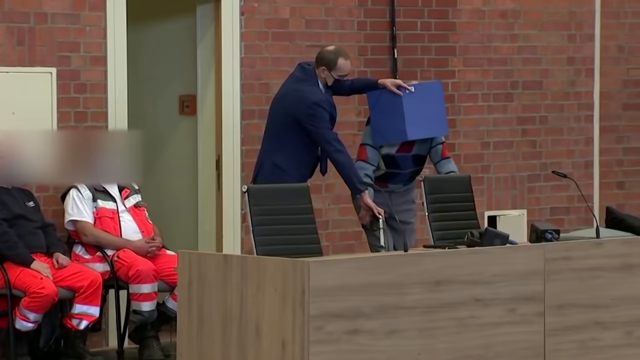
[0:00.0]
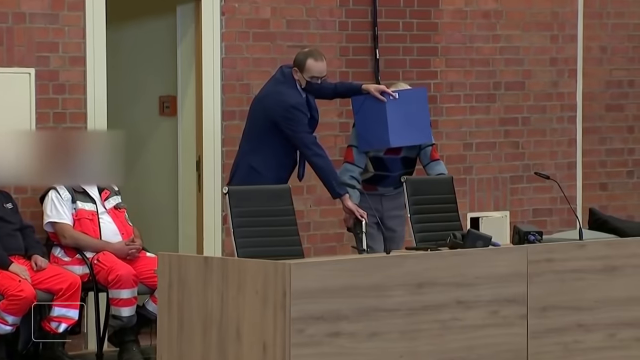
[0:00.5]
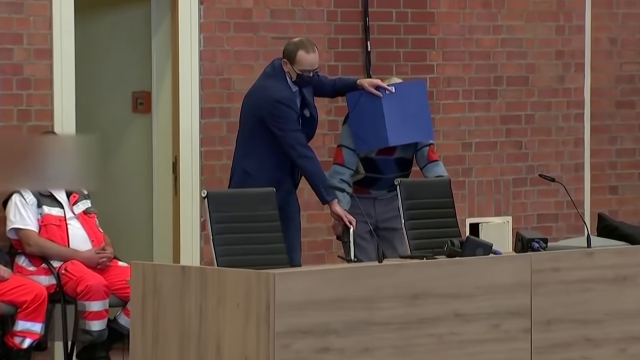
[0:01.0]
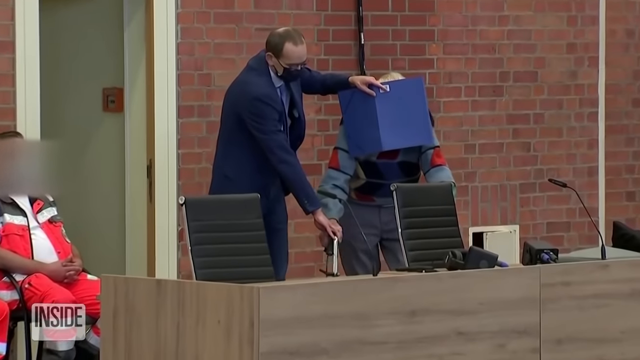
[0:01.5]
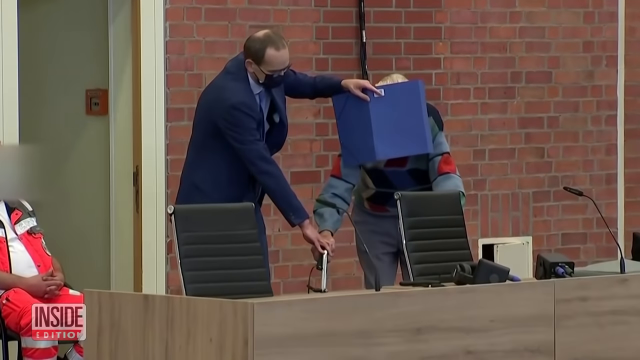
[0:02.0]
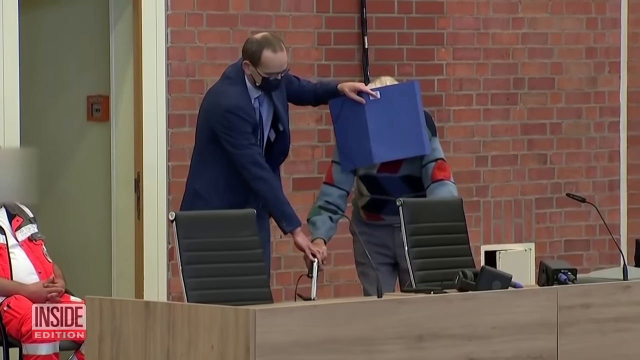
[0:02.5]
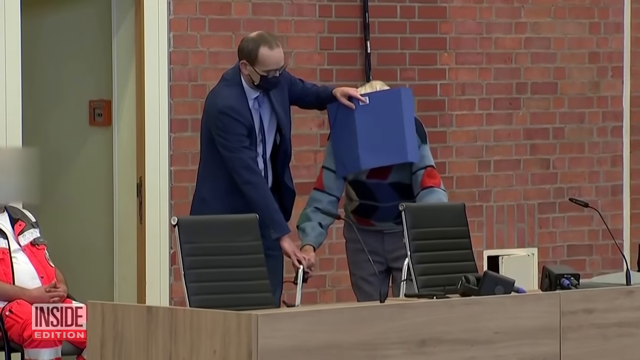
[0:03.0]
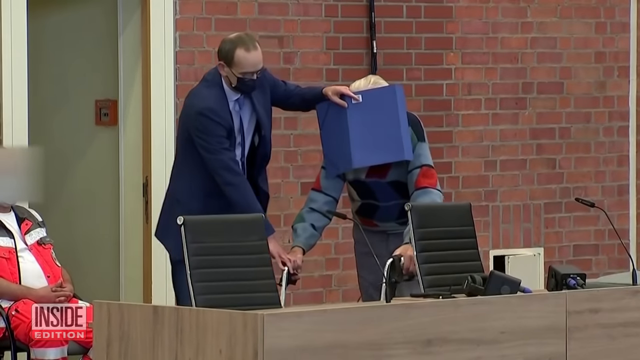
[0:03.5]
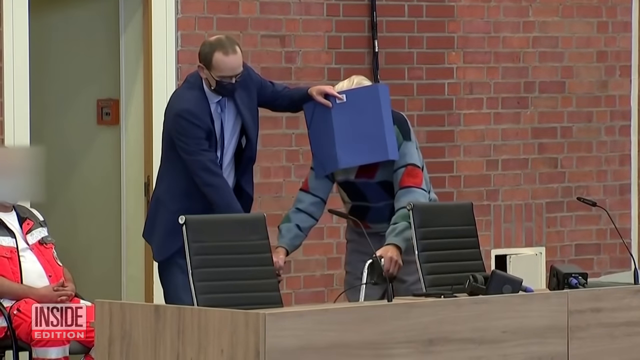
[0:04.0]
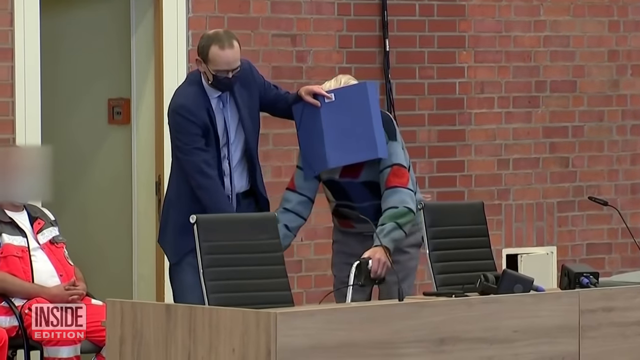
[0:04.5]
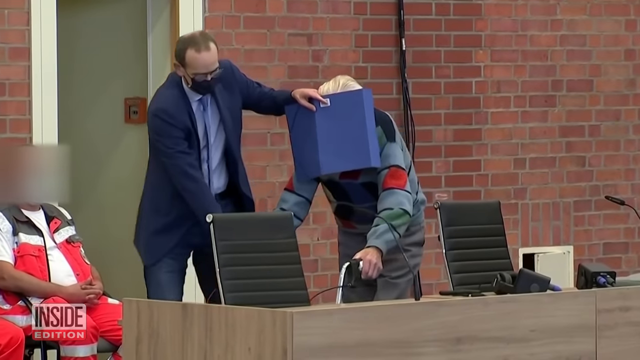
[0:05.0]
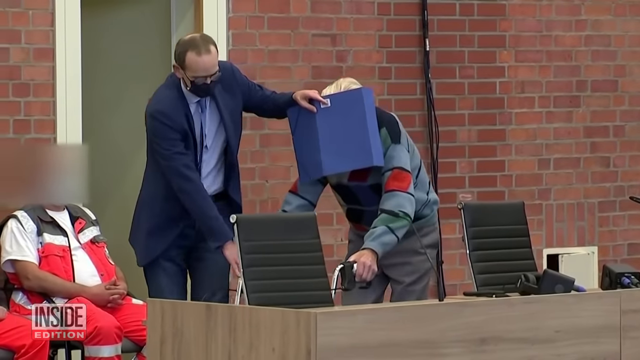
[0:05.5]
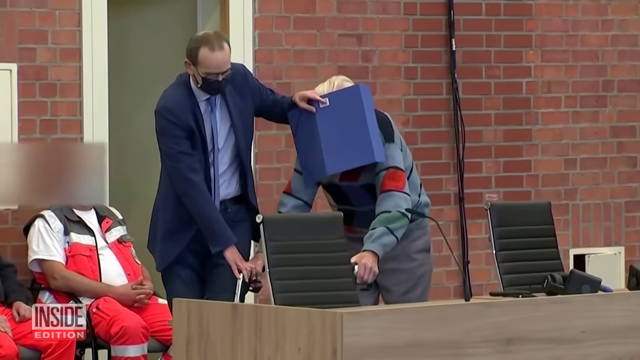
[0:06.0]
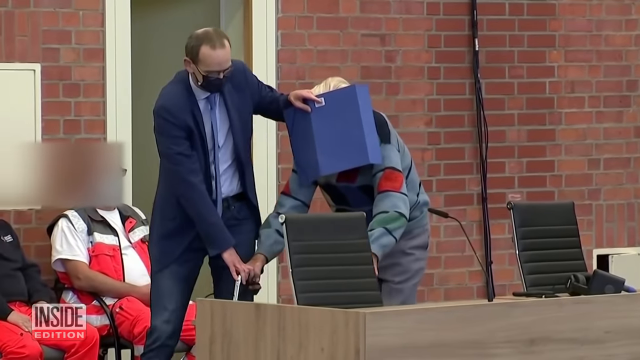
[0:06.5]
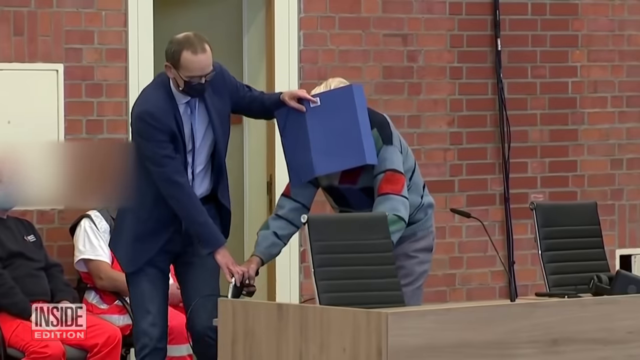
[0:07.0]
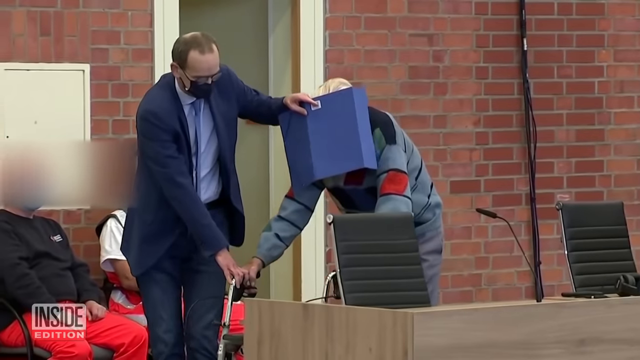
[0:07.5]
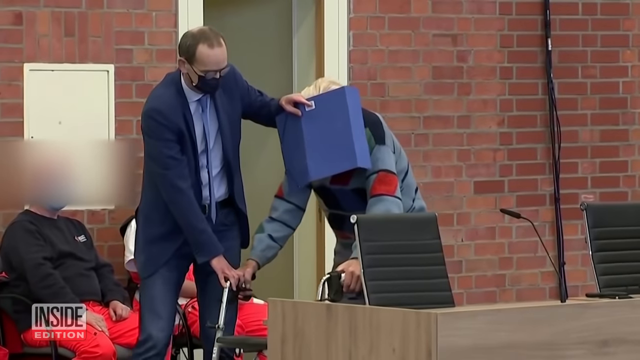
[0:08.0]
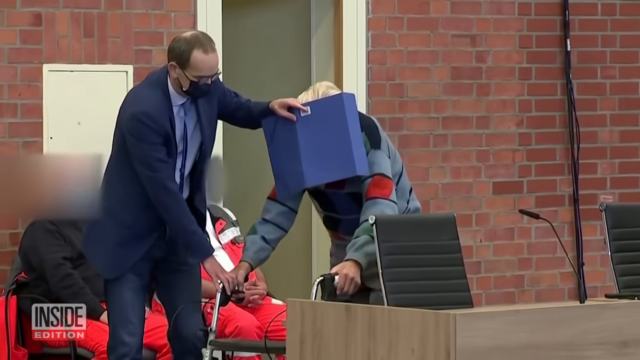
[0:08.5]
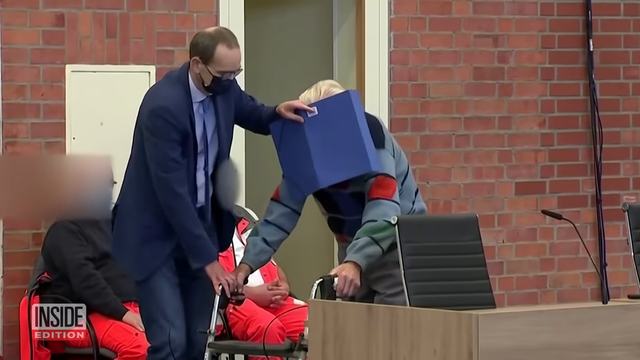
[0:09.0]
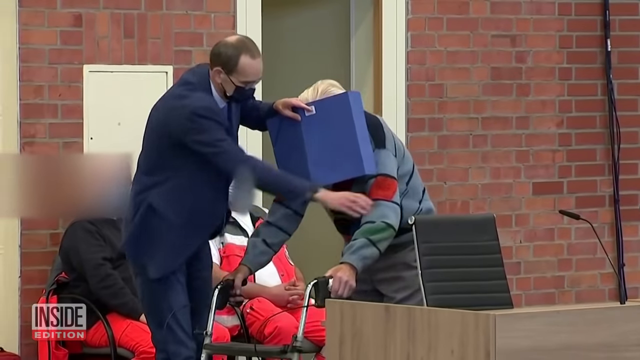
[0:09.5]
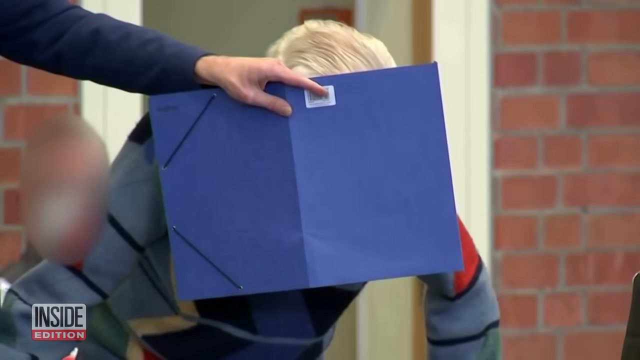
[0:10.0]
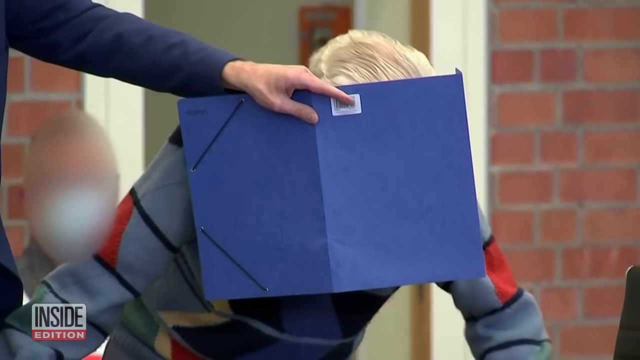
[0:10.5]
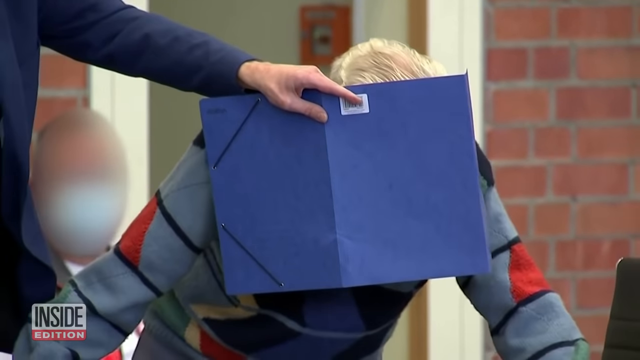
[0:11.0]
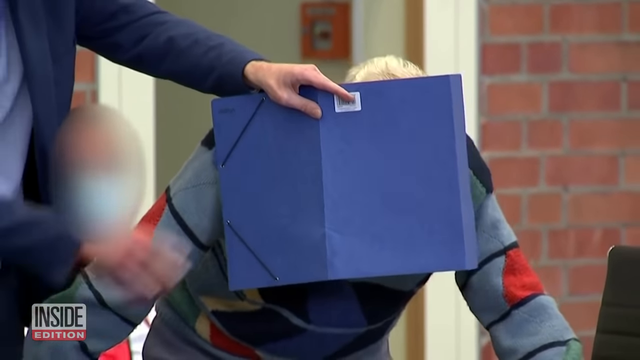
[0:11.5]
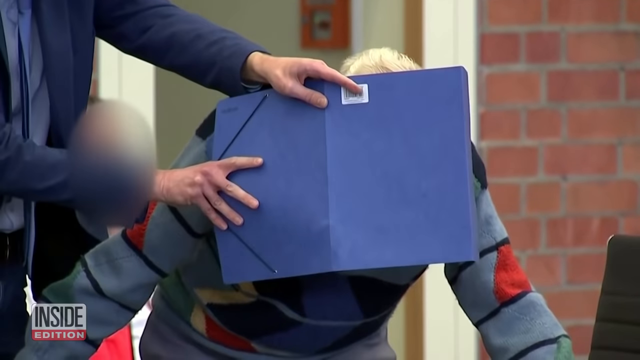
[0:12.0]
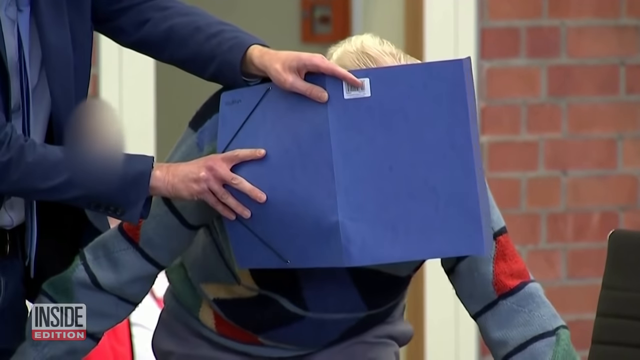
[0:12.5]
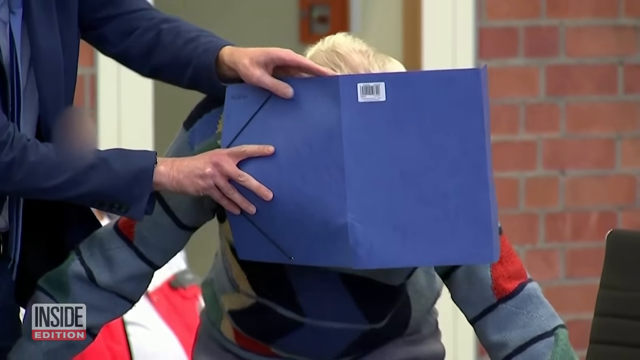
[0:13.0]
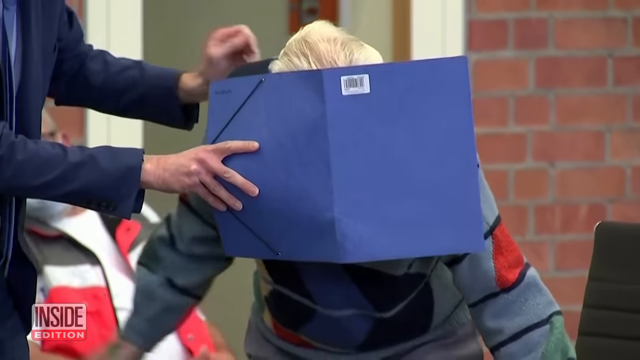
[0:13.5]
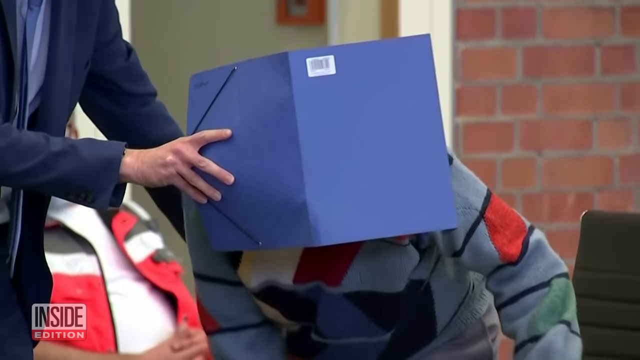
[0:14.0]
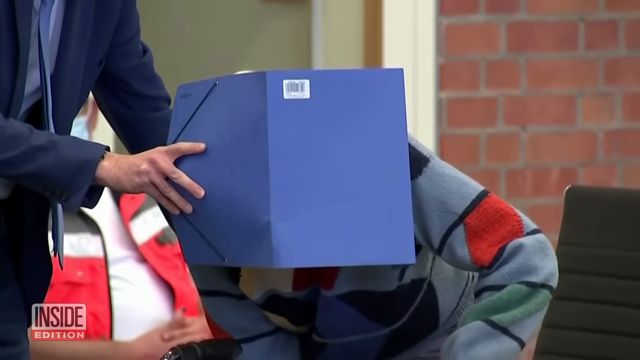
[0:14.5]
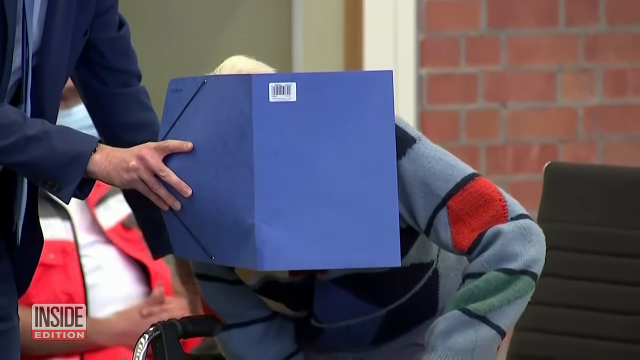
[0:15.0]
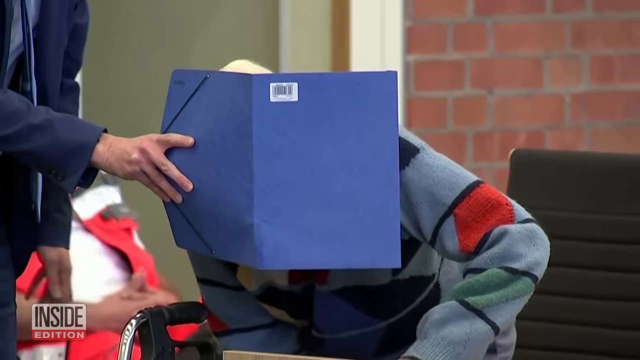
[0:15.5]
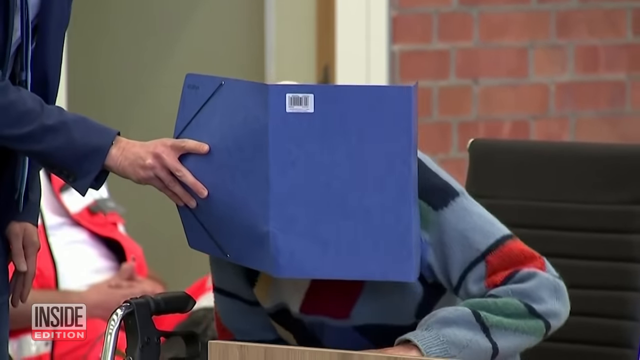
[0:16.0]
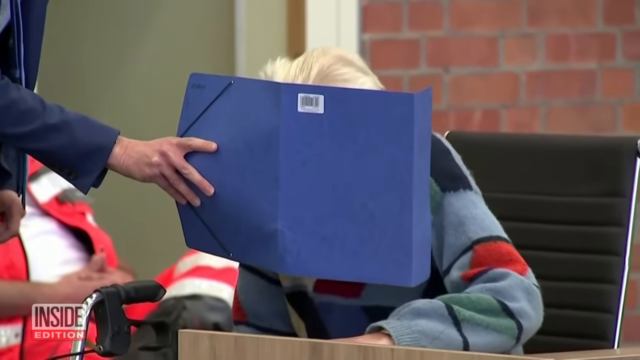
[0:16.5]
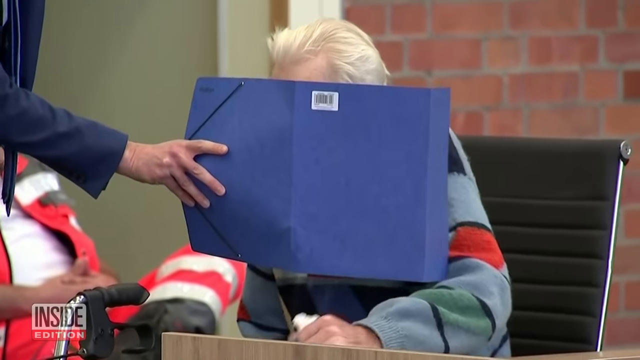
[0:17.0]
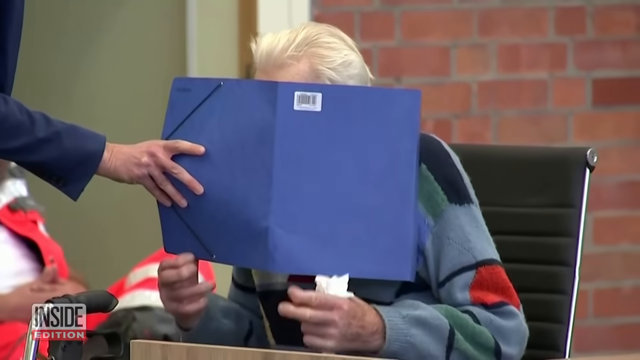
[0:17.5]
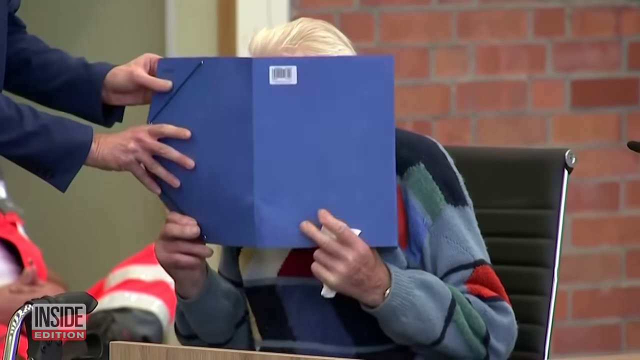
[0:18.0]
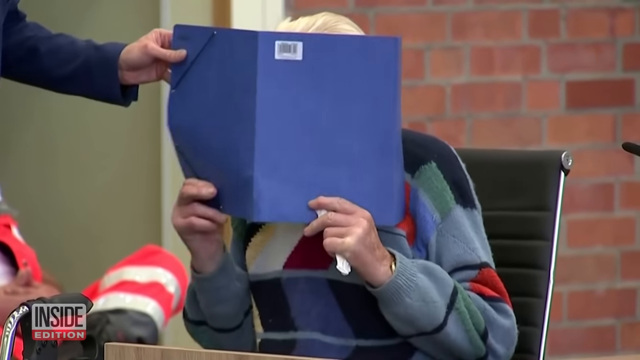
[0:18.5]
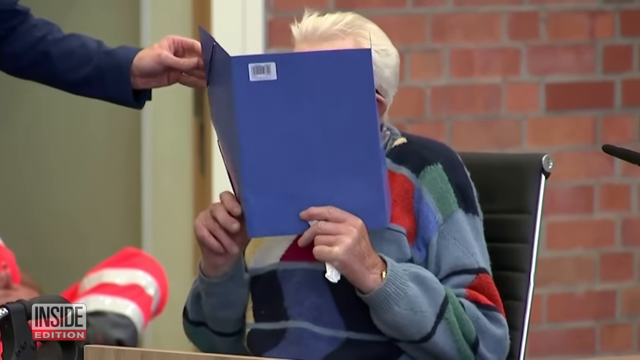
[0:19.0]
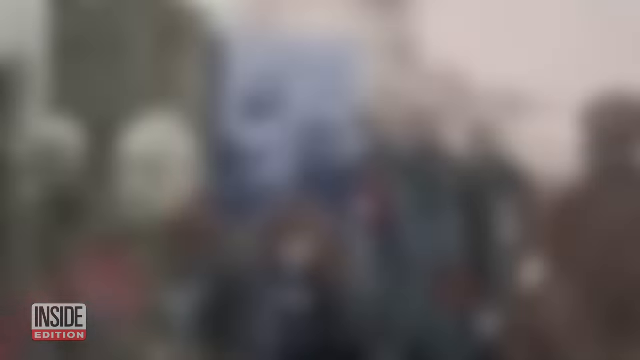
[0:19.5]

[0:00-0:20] Two men appear, one of them elderly, with gray hair, wearing a sweater with black squares and red squares on it. He is using a walker, and his identity is being hidden by a blue folder that the second man holds over his face as he walks, hiding it from the camera. The man helping him wears a navy suit and a tie, a black face mask, and has brown hair with a bald spot. In the background there is a brick wall with an open door leading to a room with beige walls. Next to that wall are seated two people in orange jumpsuits with reflective stripes, which could be prison jumpsuits. The elderly man is being helped to a seat at a table that has a microphone and two black seats. The table is surrounded by a plain wooden box that covers its lower half.